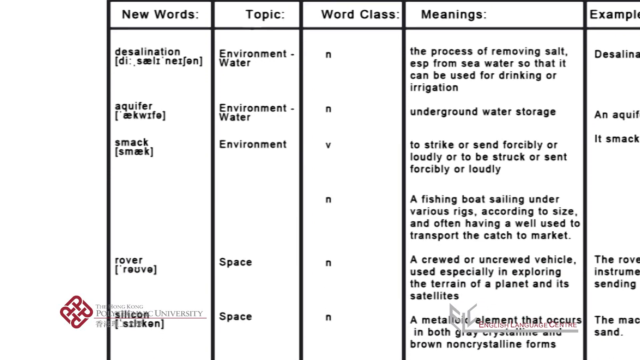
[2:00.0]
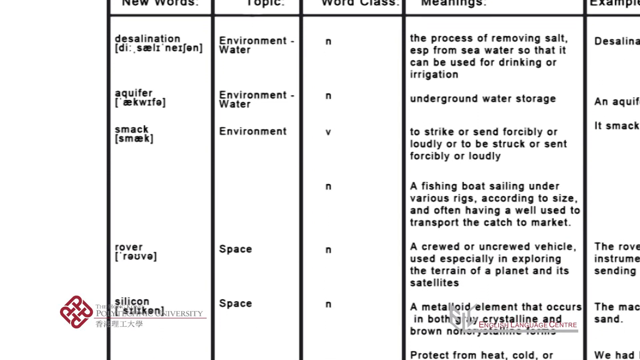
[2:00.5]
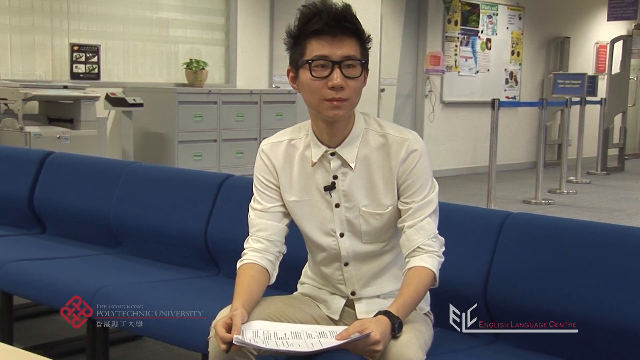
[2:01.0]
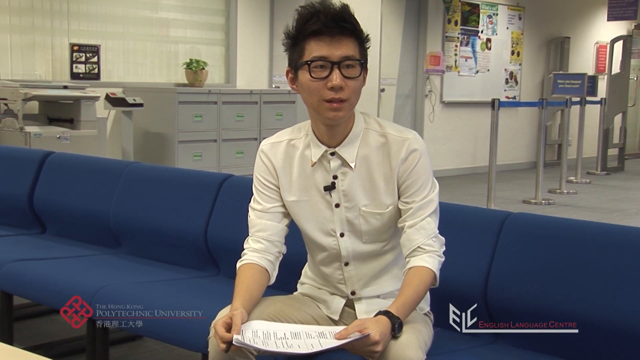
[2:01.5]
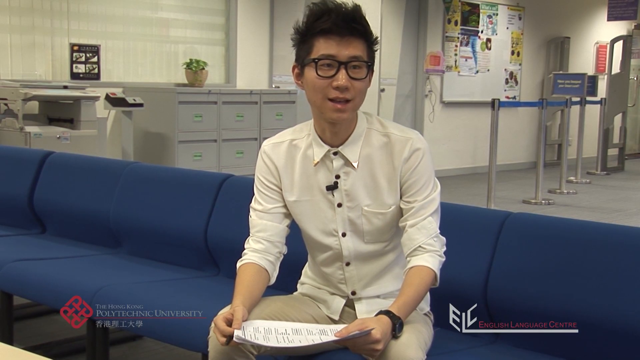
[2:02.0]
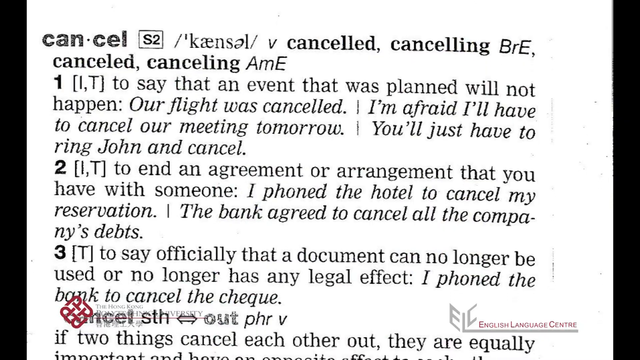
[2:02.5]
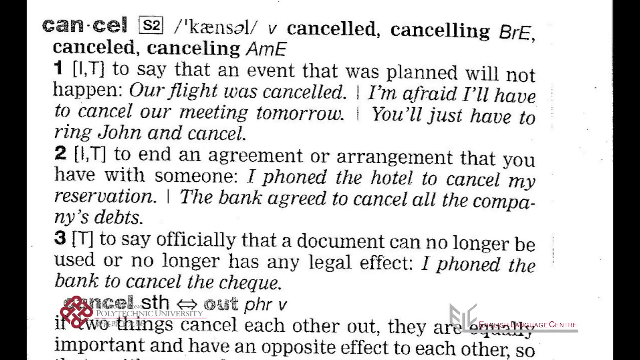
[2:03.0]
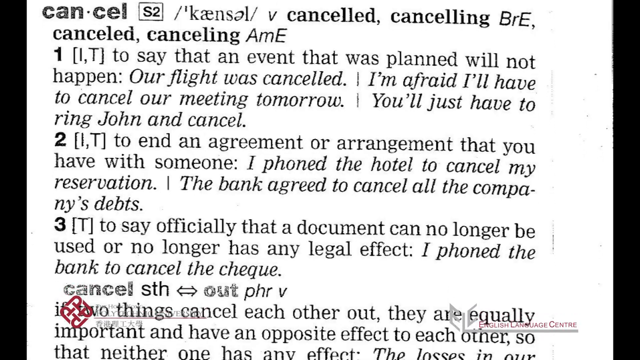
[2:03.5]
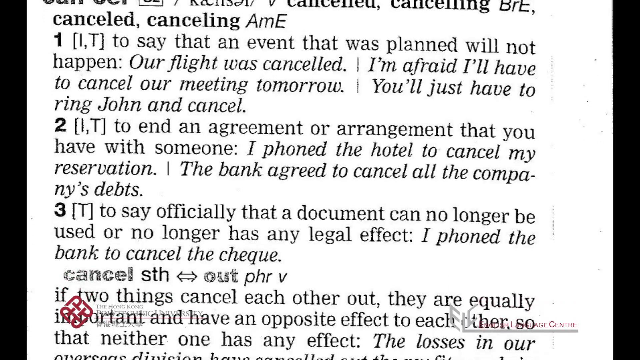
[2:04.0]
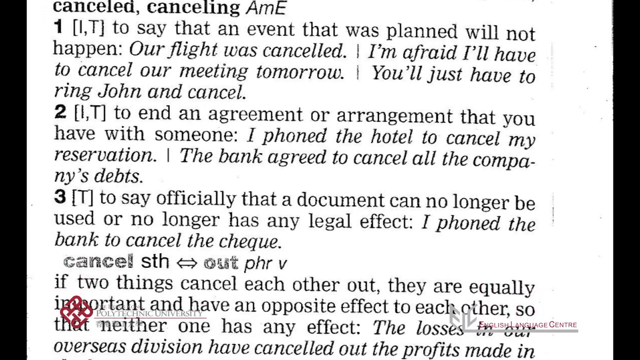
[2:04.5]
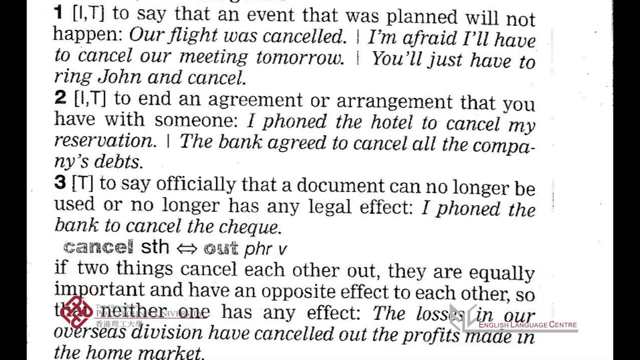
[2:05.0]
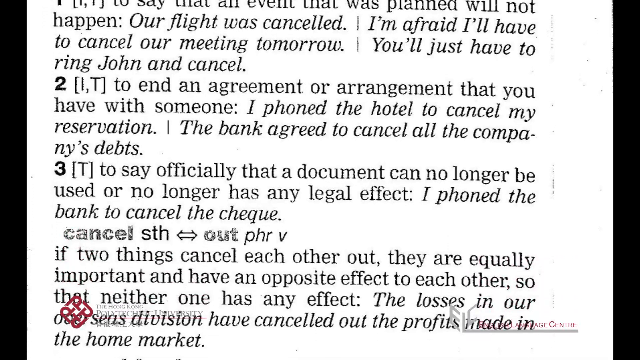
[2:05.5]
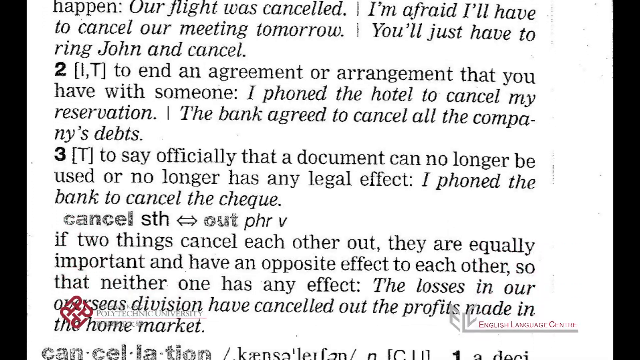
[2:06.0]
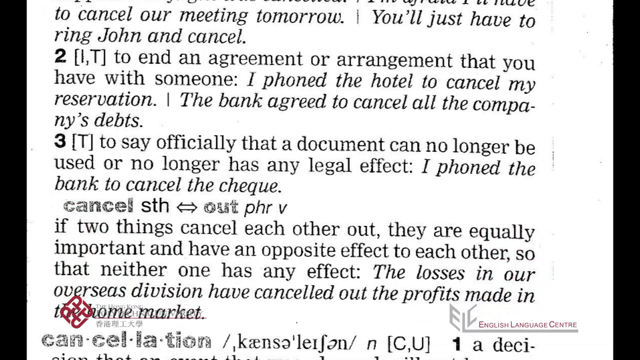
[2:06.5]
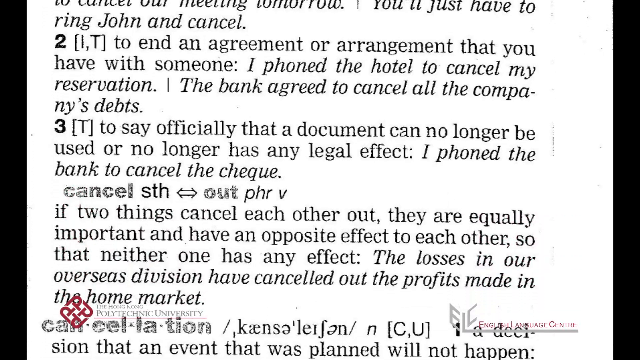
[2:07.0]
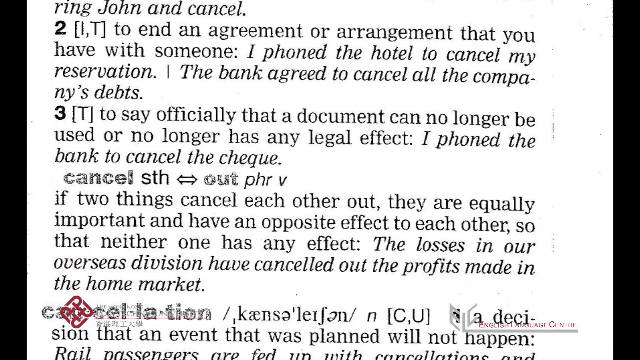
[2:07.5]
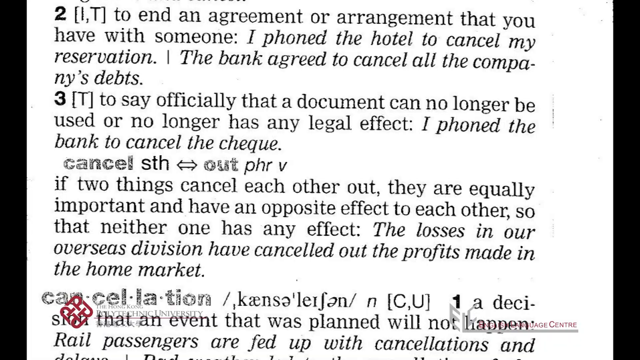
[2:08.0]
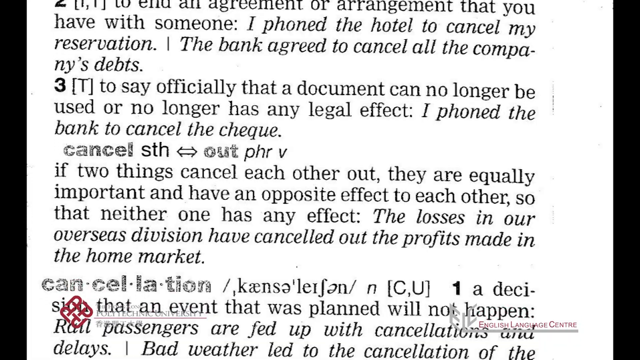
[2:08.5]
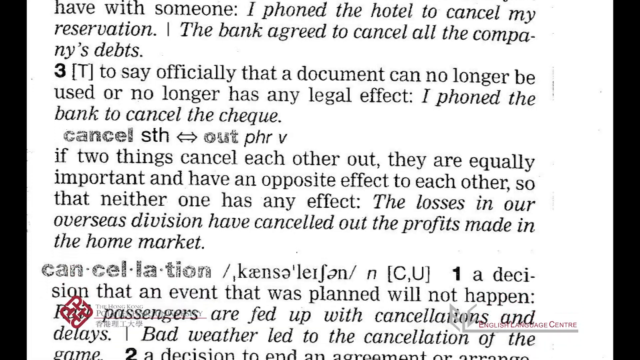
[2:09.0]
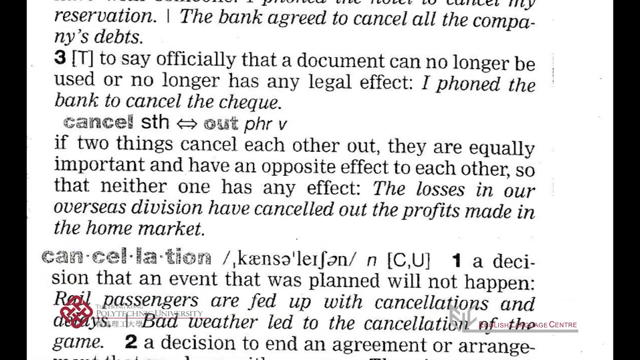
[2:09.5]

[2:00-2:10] A piece of paper is shown with multiple columns headed "new words," "topic," "word class," "meanings," and "example." Several rows of words follow: desalination, aquifer, smack, rover, and more words on the page, with descriptions of each in the columns. A student, Asian American, in a white long-sleeved shirt rolled up to the elbows, is briefly shown talking while sitting on a couch. Then what looks like a dictionary entry for the word "counsel" appears. It has the pronunciation and several forms, including counseled and counseling in the British spelling and counseled and counseling in American English, differing by one L or two. Below are three numbered definitions, marked I, T (intransitive and transitive) for the first, I, T for the second, and T for the third, each with a definition and several examples.